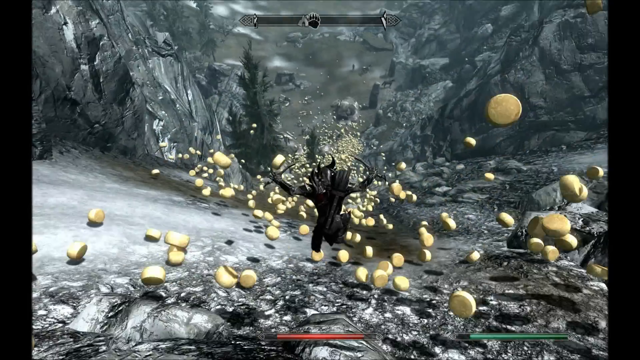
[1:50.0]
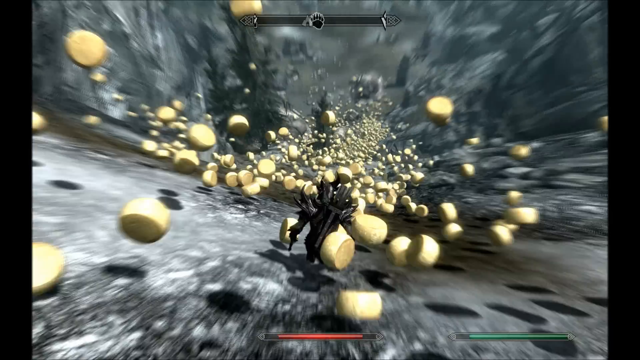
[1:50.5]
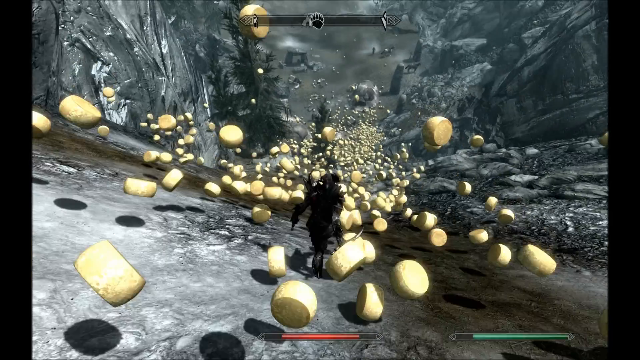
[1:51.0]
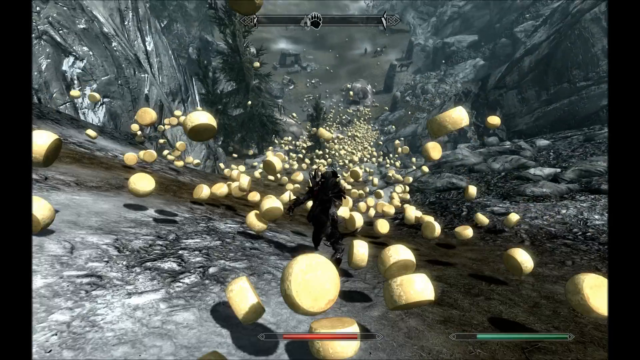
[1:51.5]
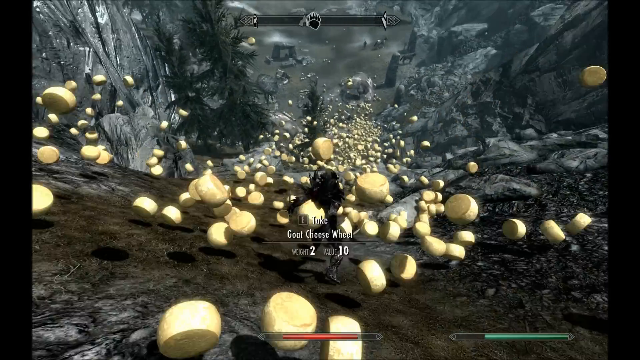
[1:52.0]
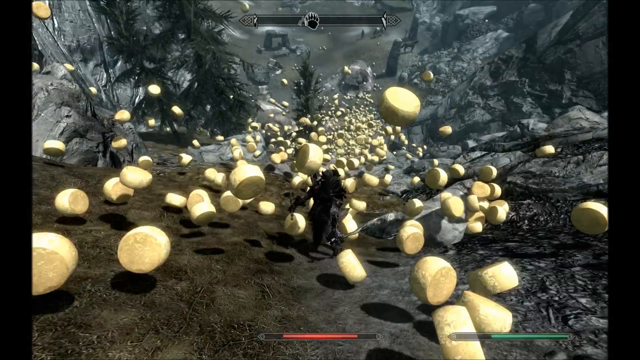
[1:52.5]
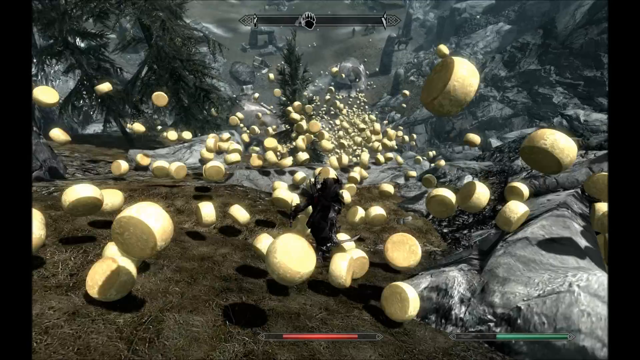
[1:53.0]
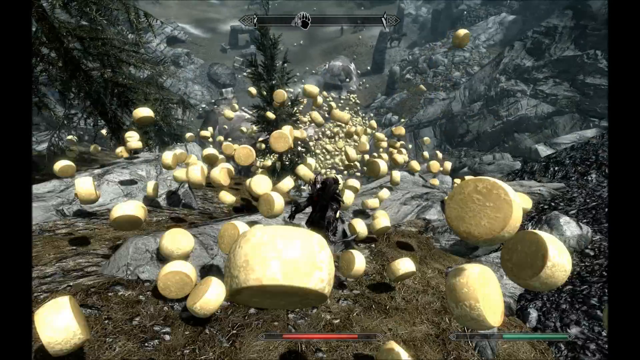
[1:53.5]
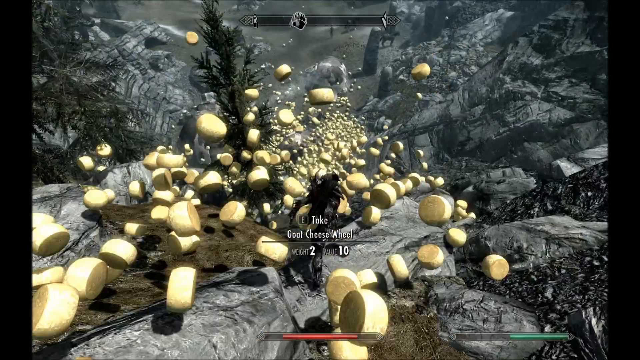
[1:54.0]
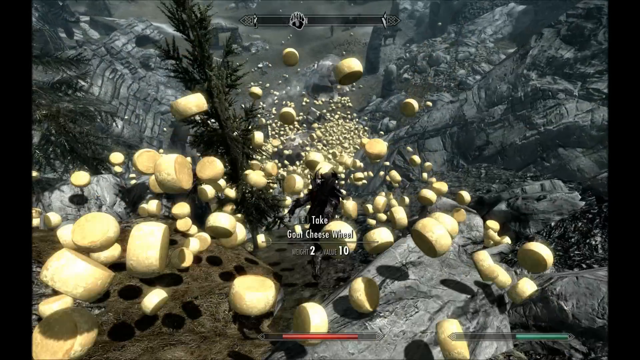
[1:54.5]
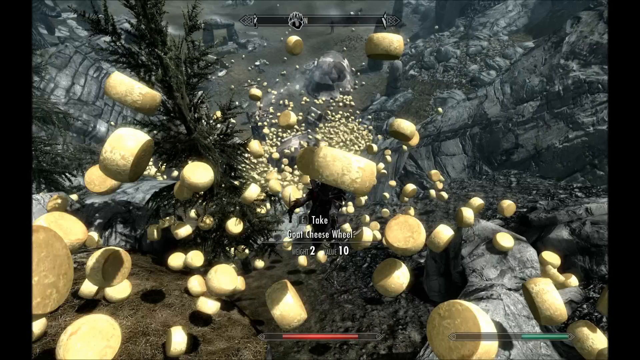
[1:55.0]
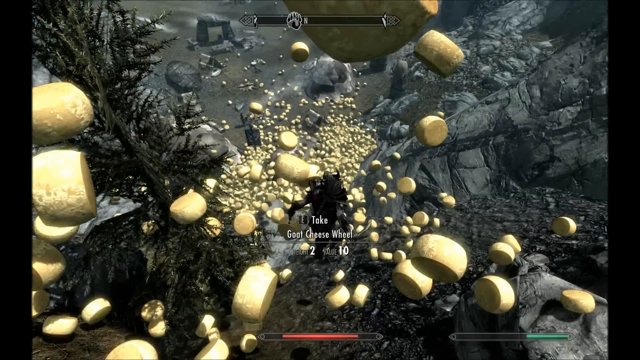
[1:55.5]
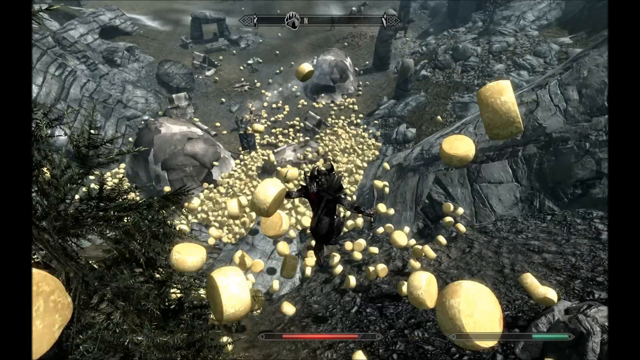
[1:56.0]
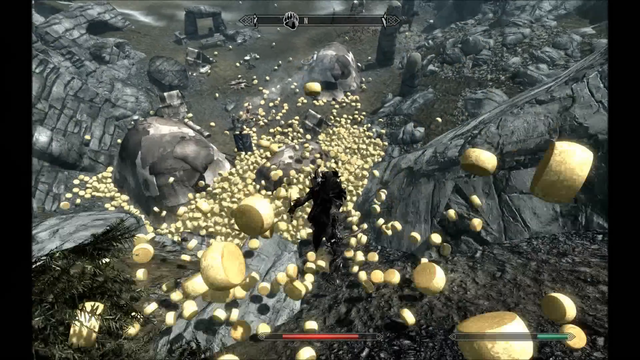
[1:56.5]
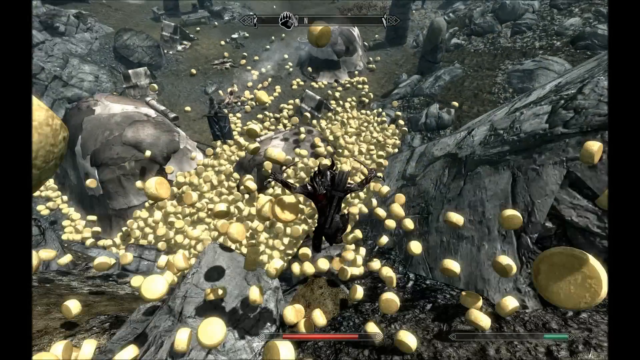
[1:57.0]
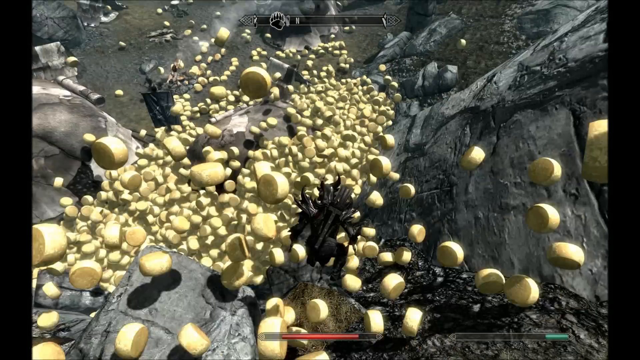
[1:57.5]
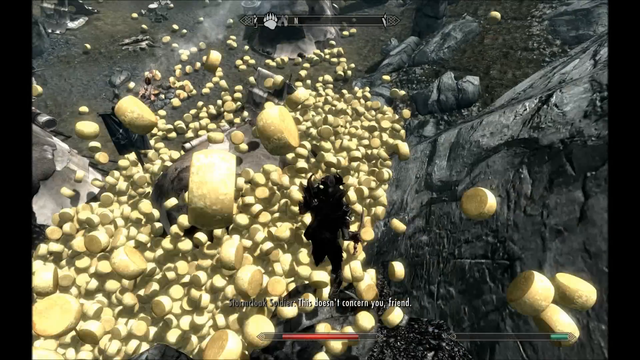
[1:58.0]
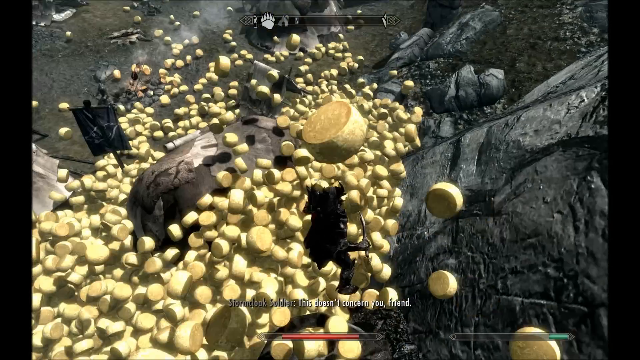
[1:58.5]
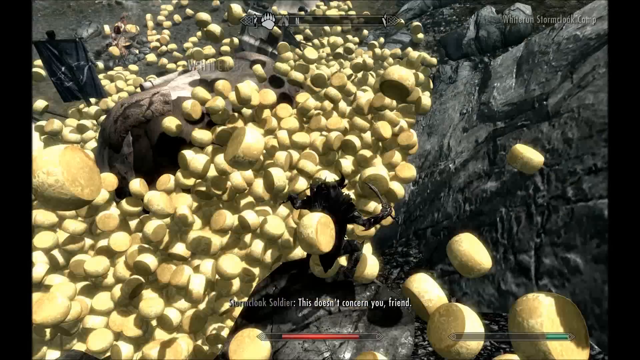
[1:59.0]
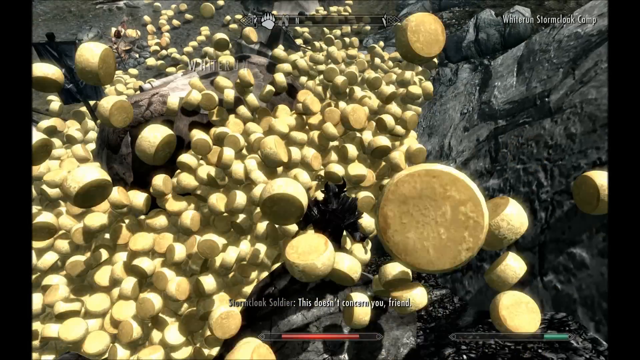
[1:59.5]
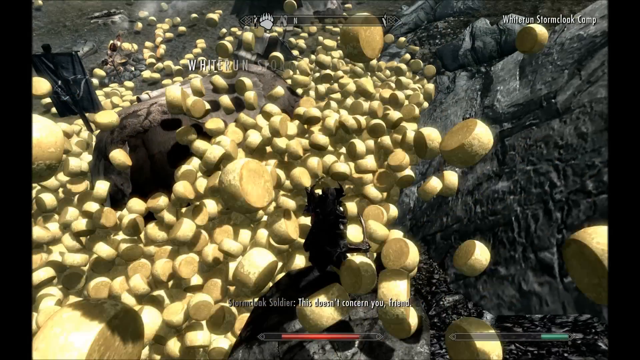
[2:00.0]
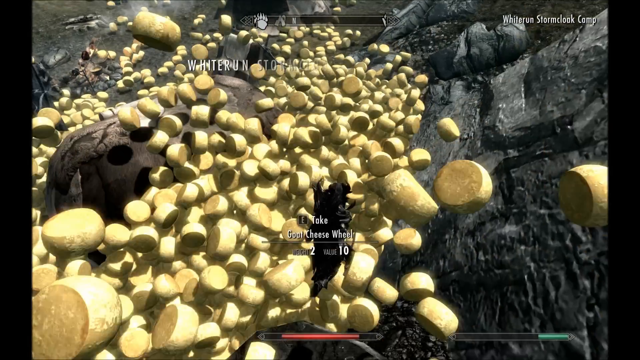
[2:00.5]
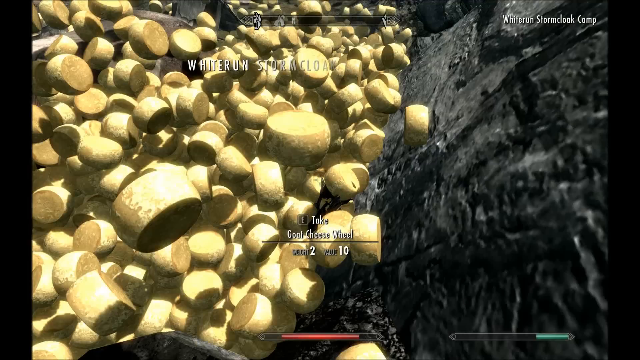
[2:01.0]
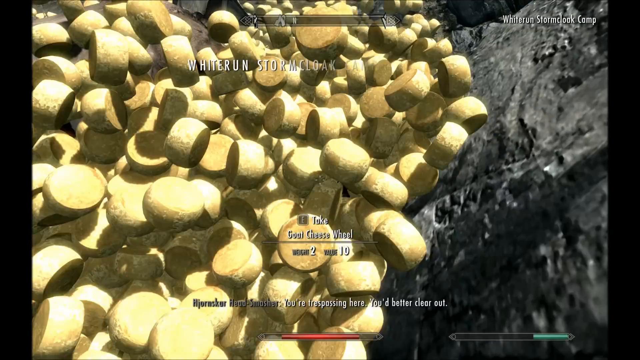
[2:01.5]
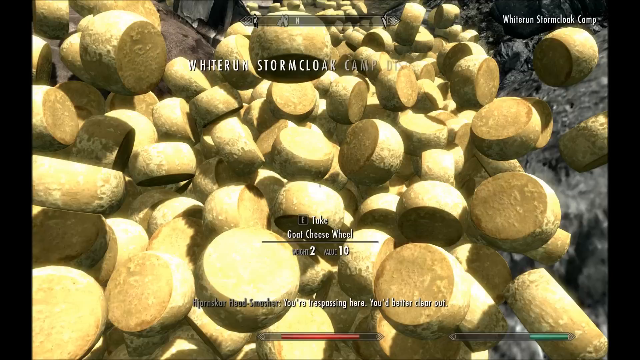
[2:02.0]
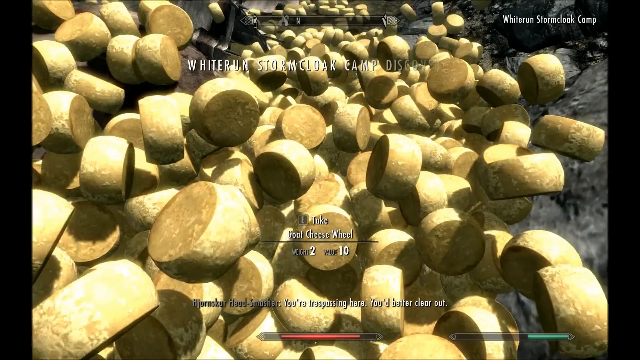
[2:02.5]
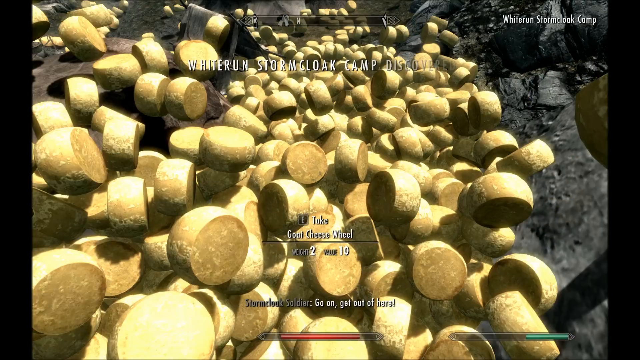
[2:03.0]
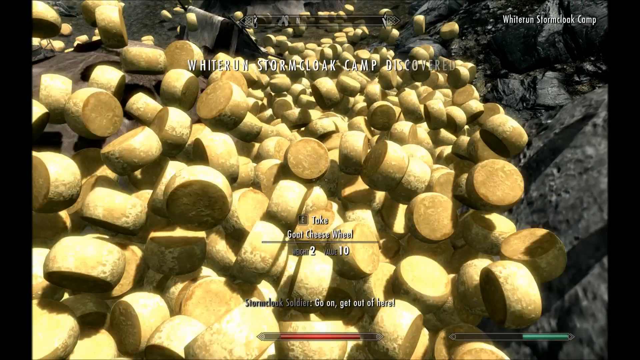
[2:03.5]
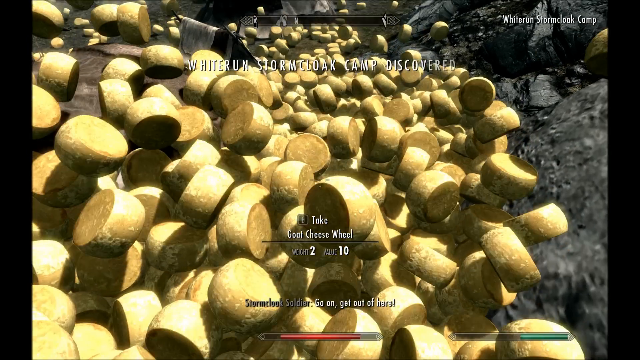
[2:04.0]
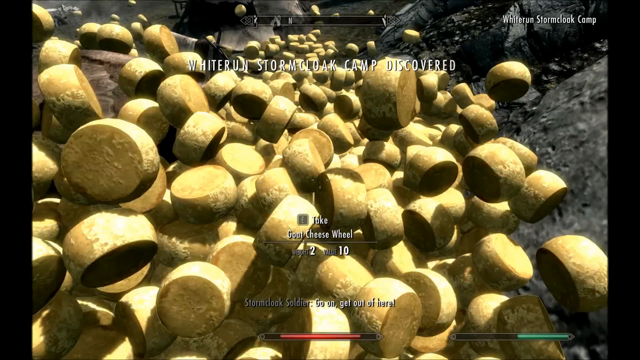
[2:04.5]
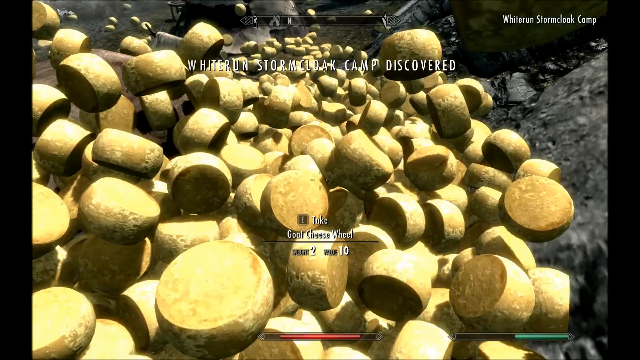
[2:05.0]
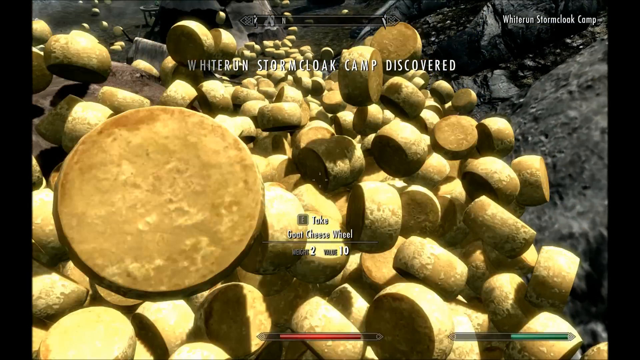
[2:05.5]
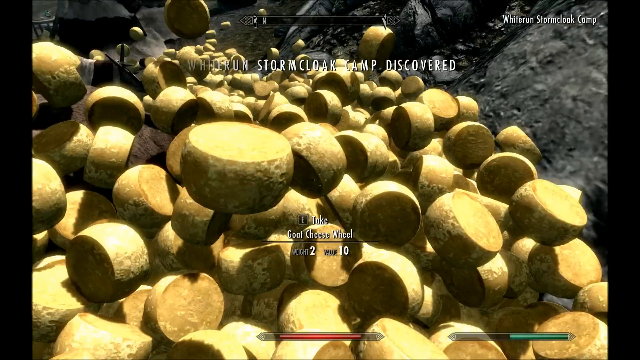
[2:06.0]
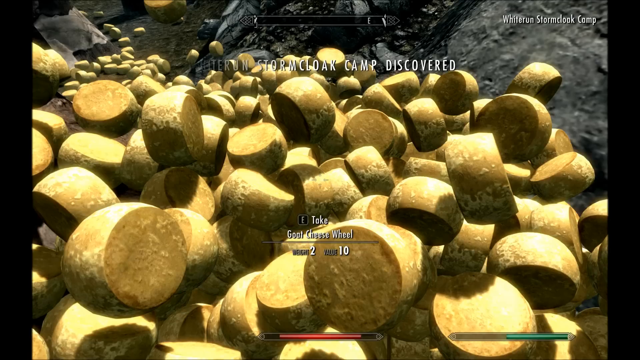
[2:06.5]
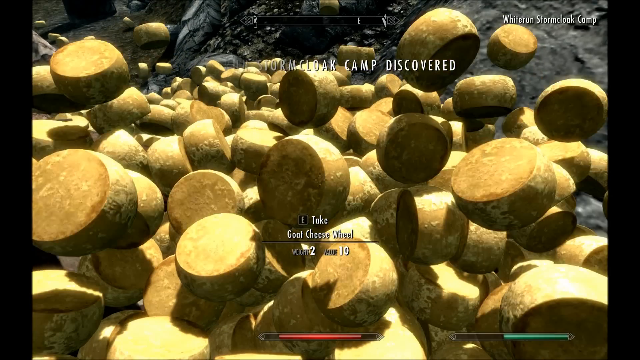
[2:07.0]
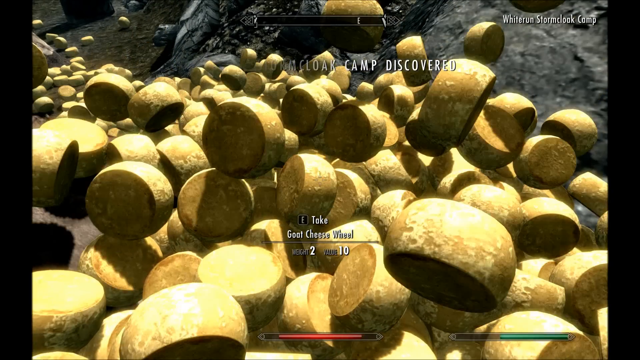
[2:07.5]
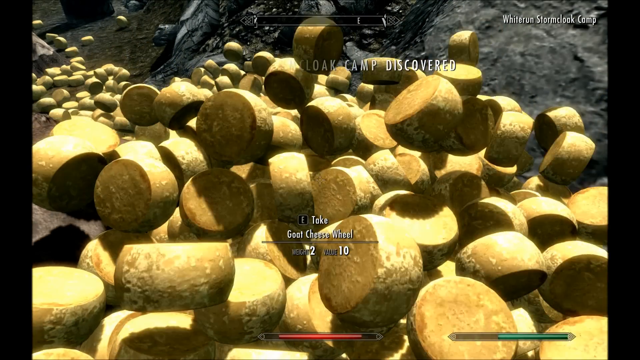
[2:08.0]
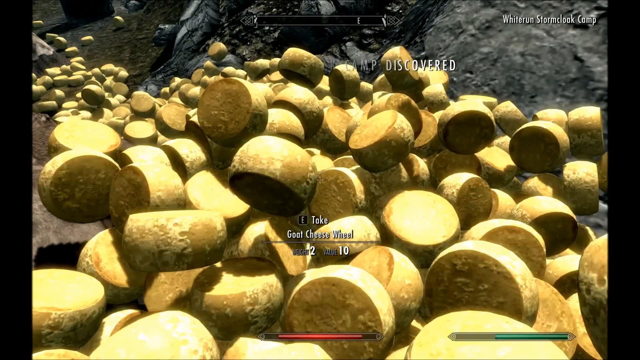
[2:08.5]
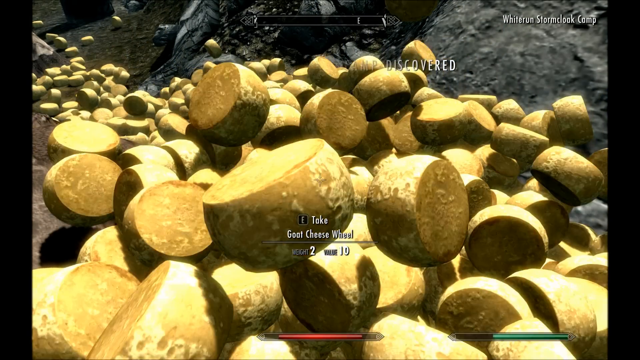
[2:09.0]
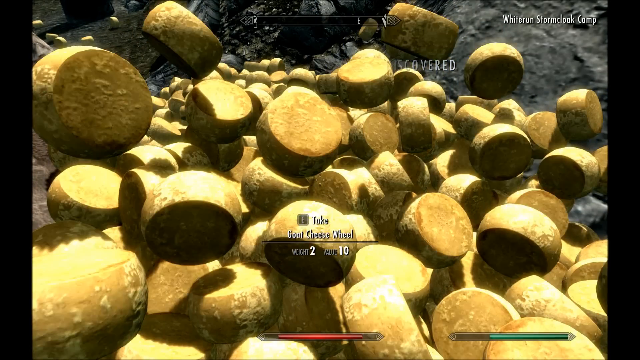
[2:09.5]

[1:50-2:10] The camera looks from behind the character in the first-person game's third-person view as the character goes down a hill. The hill starts off snowy and gets grassier, with a kind of gloomy, gray look. Cheese wheels fall down the hill with the character. White wording pops up right behind the character reading "take cheese wheel". Tall mounds are on the left and right sides of the character, with some trees on the left-hand side. As the character moves down the hill it gets a little rockier. A type of compass is at the upper center of the screen. Toward the end, text reads "White Run Storm Cloak Camp discovered".